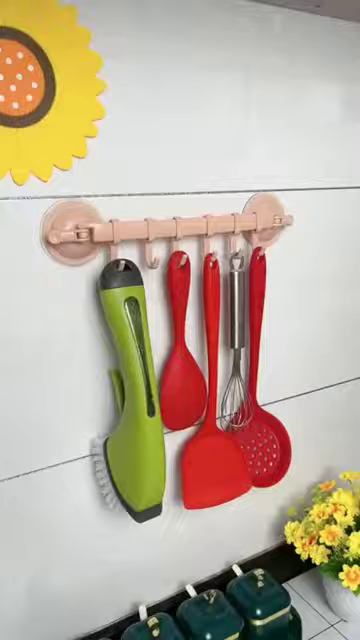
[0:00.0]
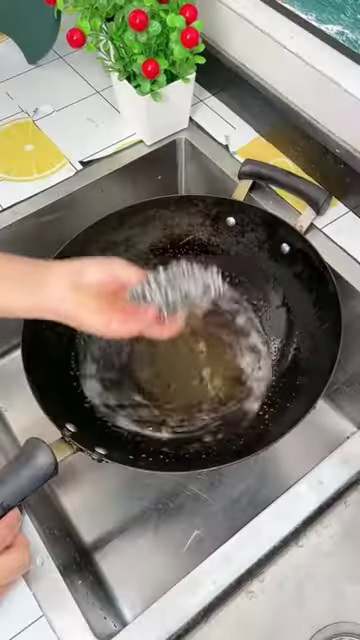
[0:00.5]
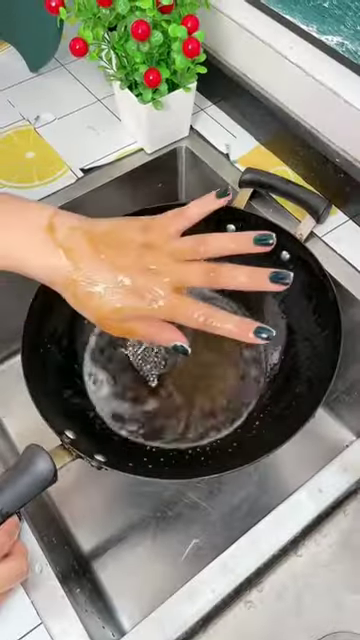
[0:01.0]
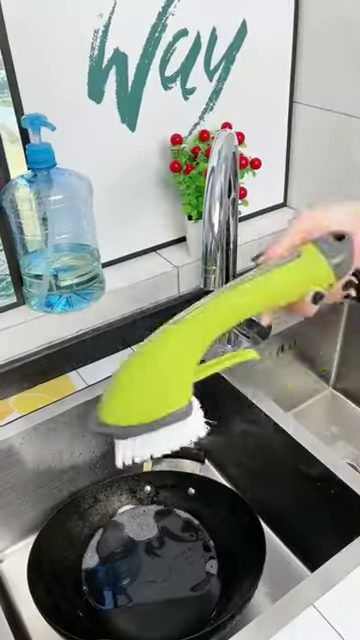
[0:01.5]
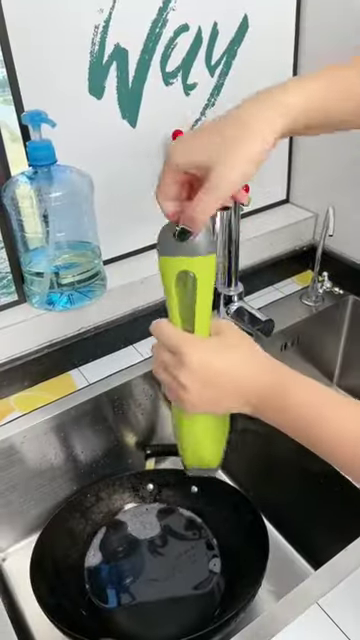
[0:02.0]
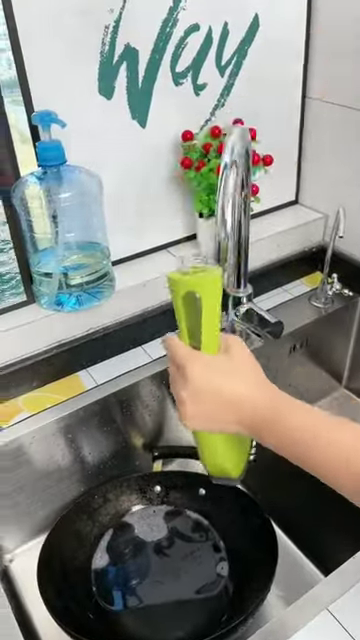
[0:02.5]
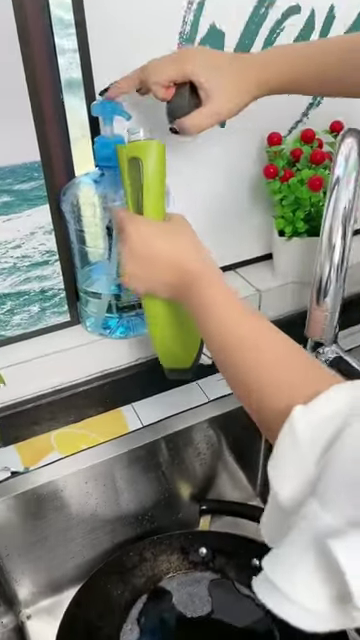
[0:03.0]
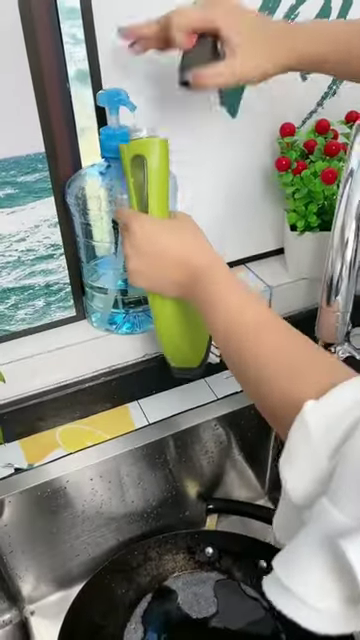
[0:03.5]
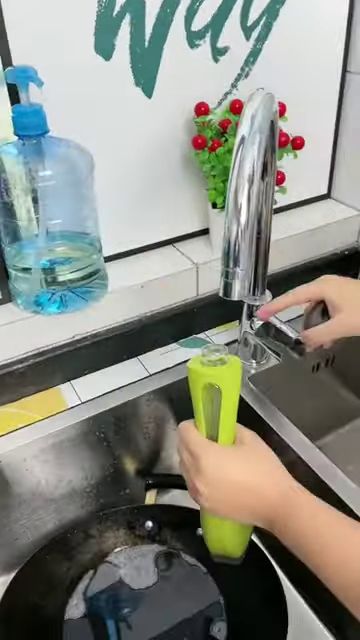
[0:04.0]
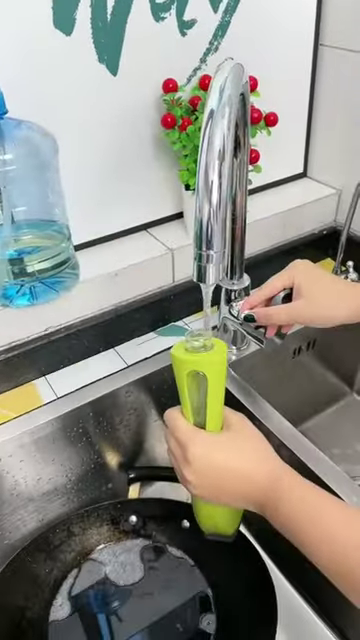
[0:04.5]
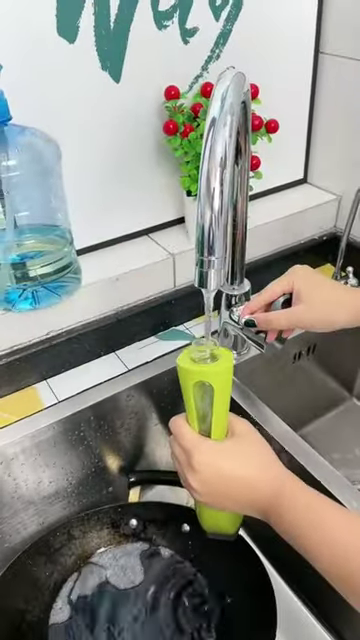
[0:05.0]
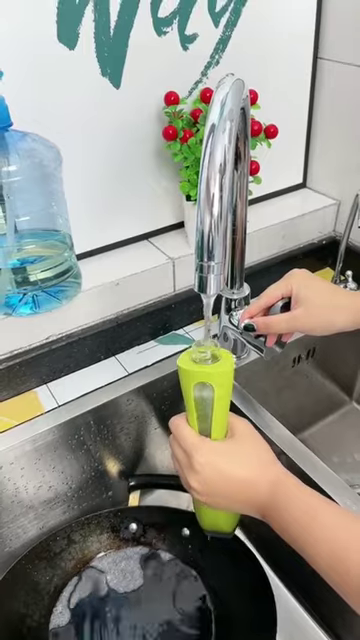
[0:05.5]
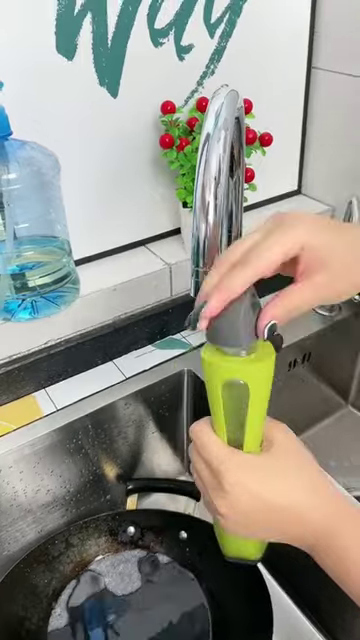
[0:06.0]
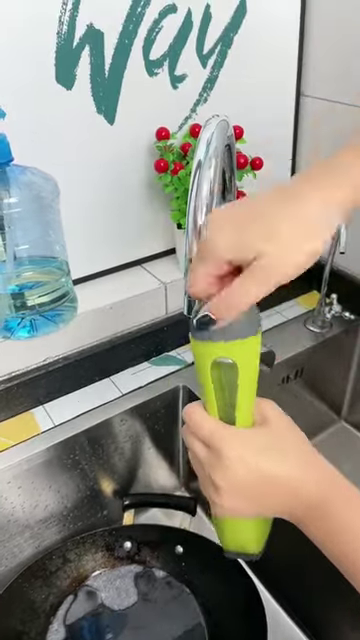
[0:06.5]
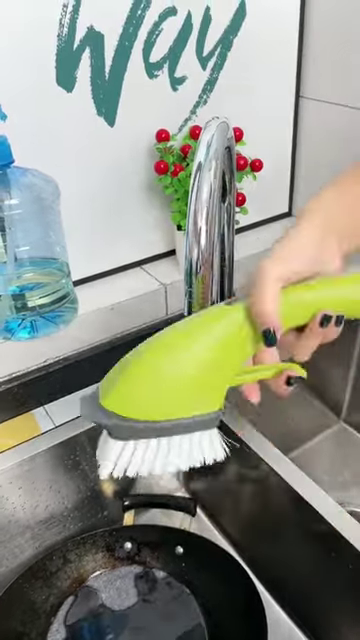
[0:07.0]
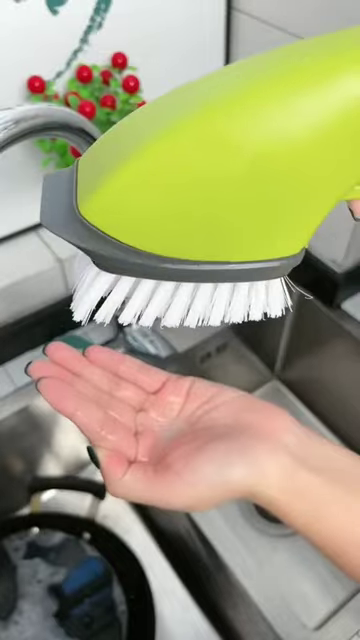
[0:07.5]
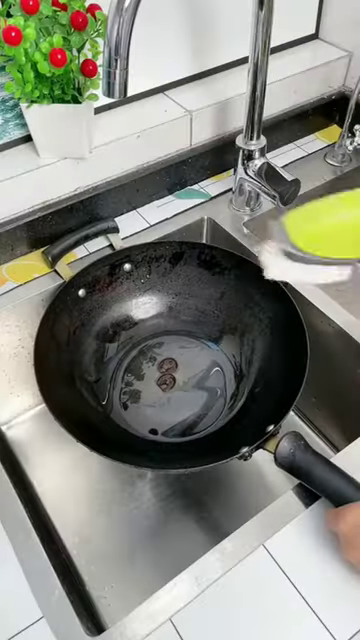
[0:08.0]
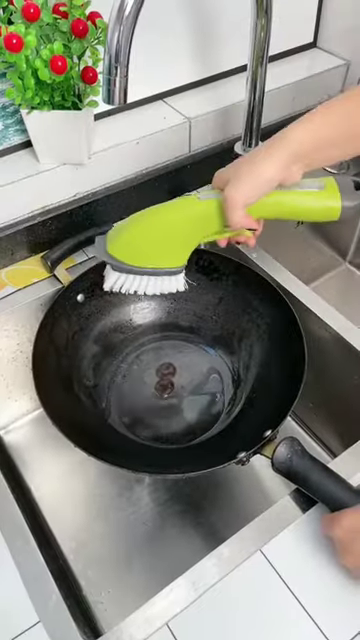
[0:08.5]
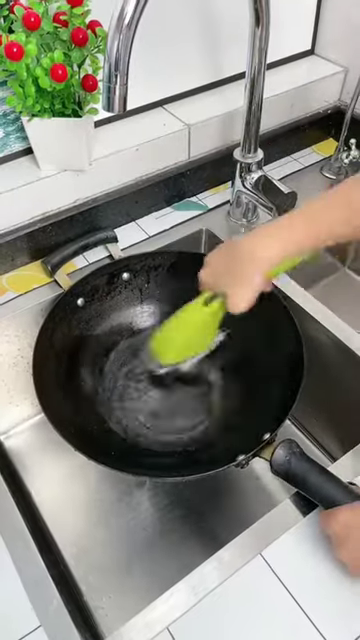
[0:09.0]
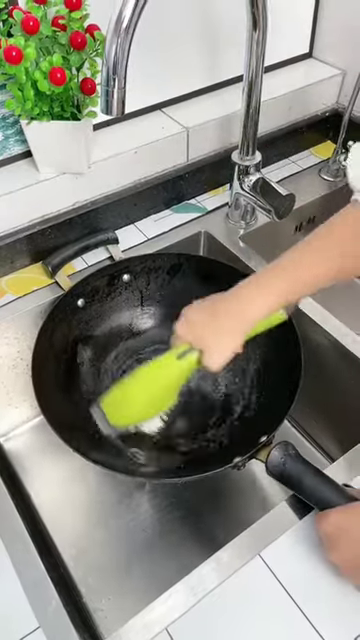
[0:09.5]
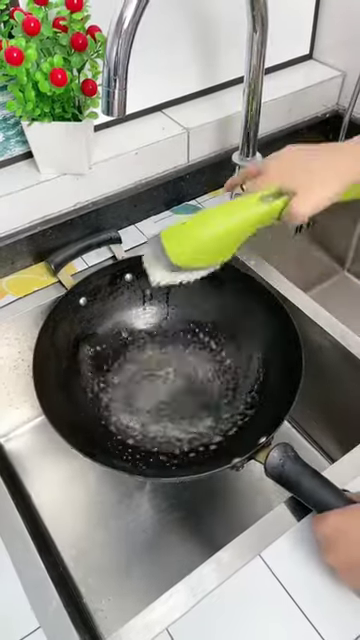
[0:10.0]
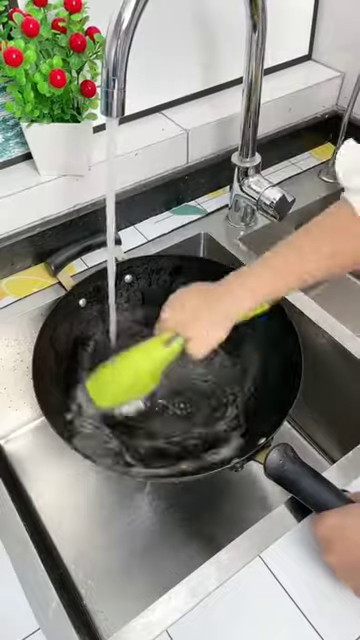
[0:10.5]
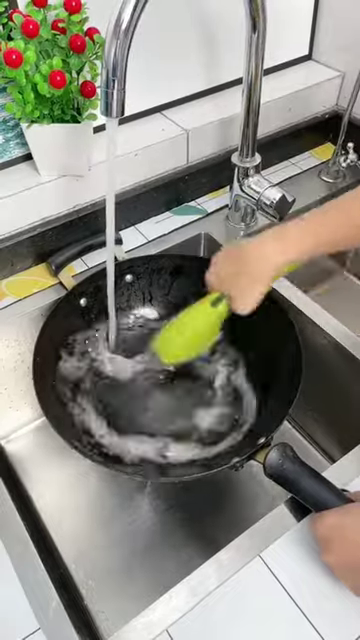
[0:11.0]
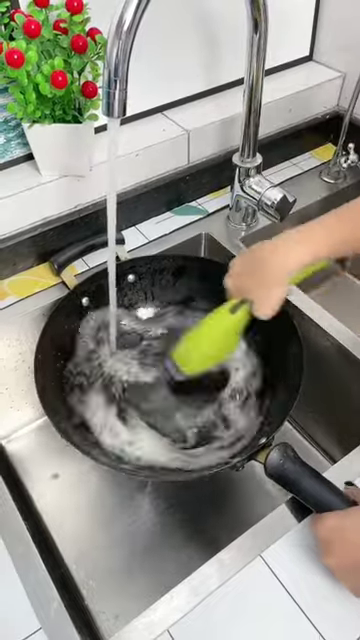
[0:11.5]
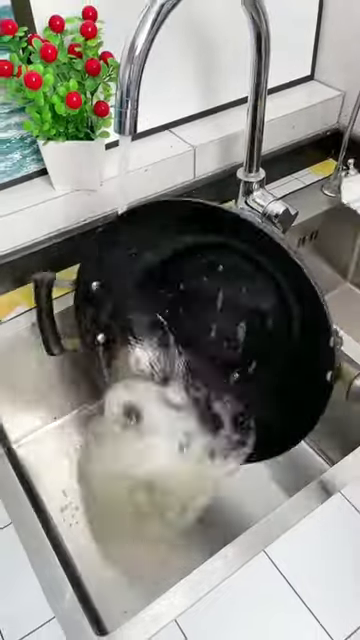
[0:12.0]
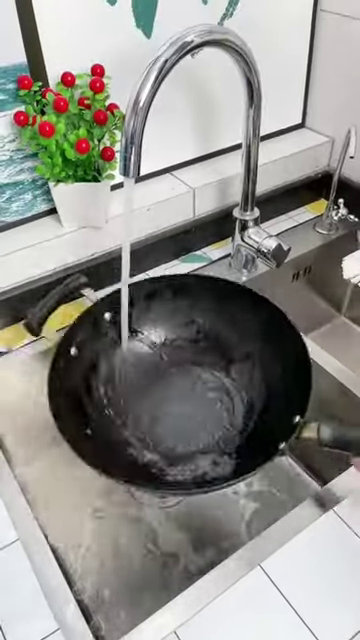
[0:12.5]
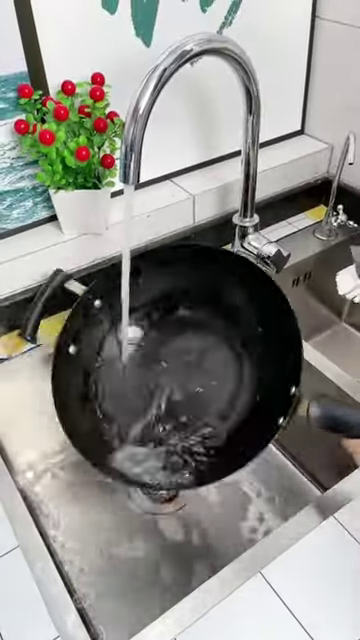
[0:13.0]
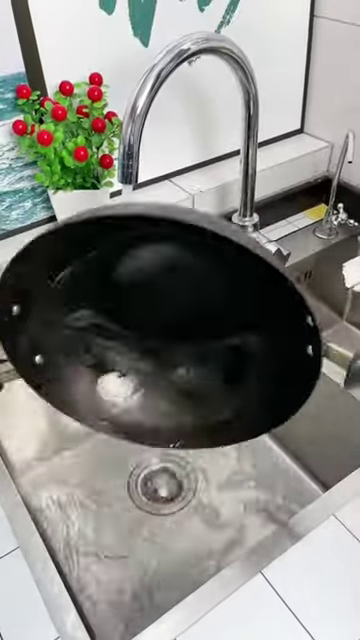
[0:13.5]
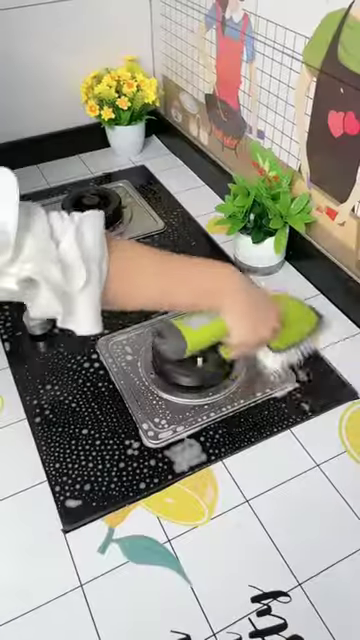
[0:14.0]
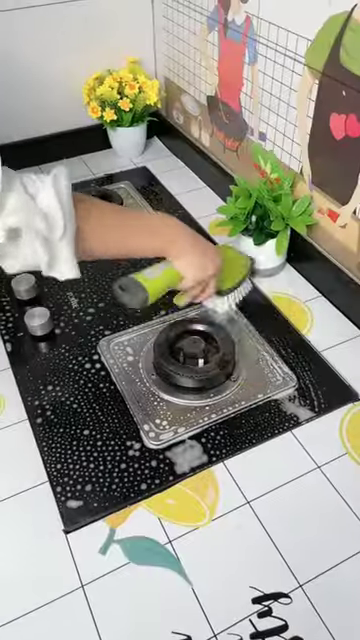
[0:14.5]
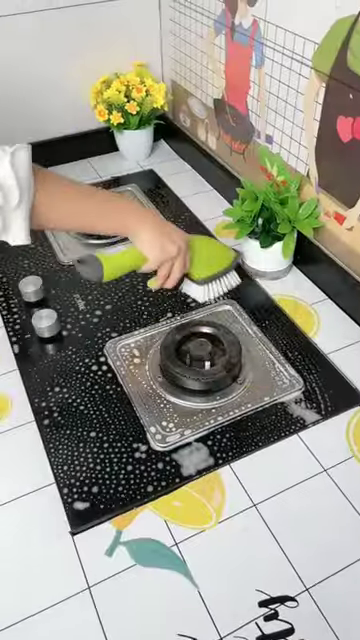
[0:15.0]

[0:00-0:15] In a modern kitchen with large white tiles, an individual, presumably female, cleans a black wok with what looks like perhaps steel wool. They then display an olive-ish green cleaning brush with a tube that can be filled with soap and water, showing the tube ejecting the liquid onto their hand, and then do the same on the wok, cleaning it under water. The next shot shows the individual cleaning a two-eyed stove top with a black glass top using the brush. There is a small plant right above, perhaps two of the same small plants, with green leaves and red fruit in a white planter-style box. In the other shot there are two additional small plants, one with green leaves and the other with yellow blooms. The sink looks like some sort of brushed silver metal.